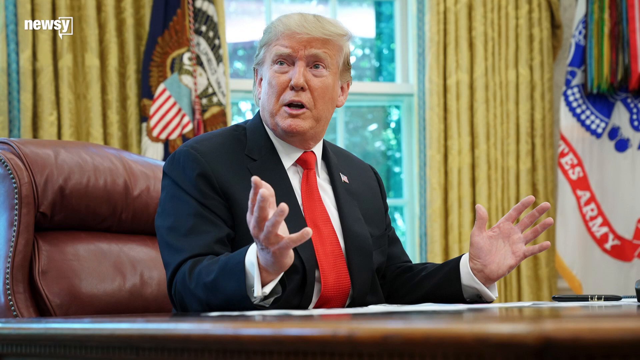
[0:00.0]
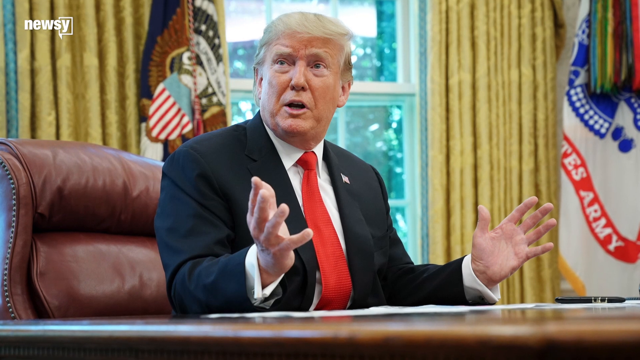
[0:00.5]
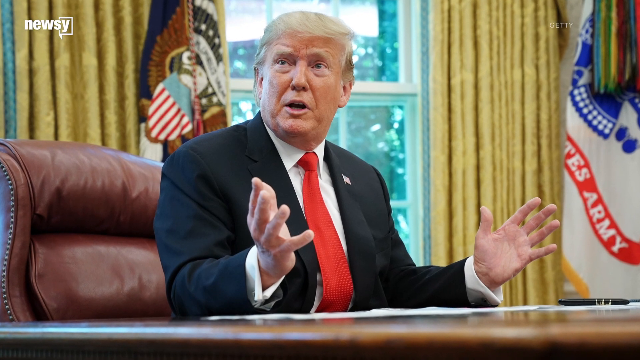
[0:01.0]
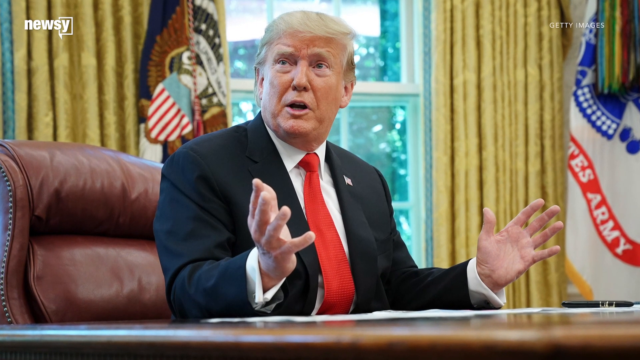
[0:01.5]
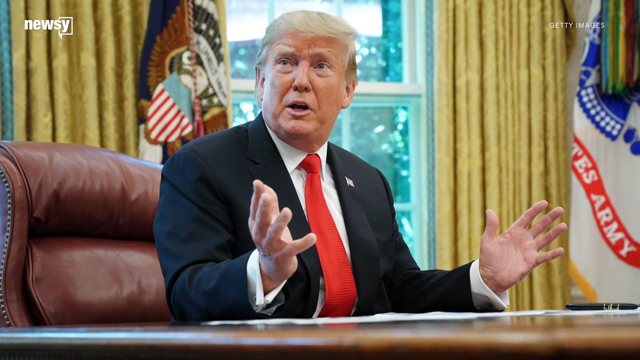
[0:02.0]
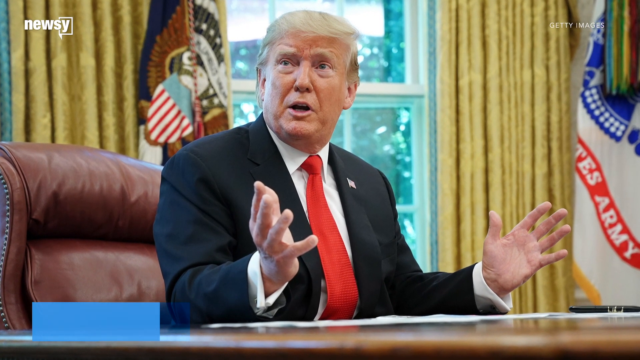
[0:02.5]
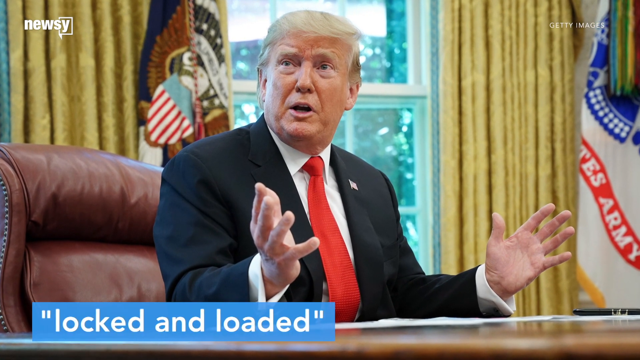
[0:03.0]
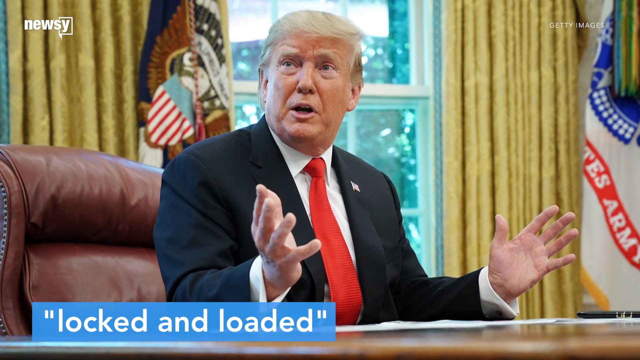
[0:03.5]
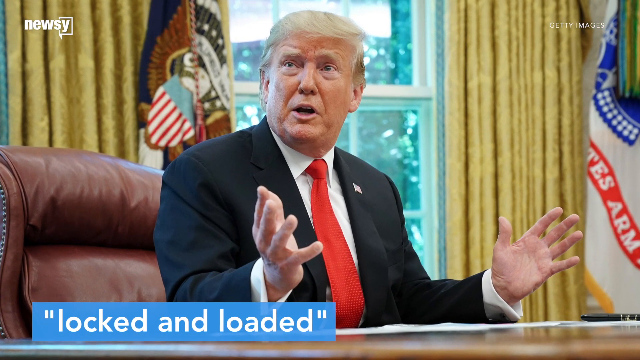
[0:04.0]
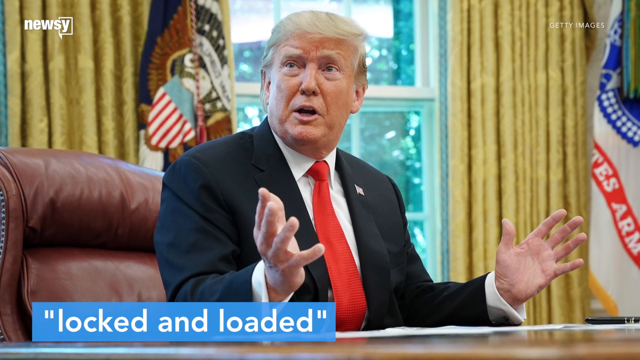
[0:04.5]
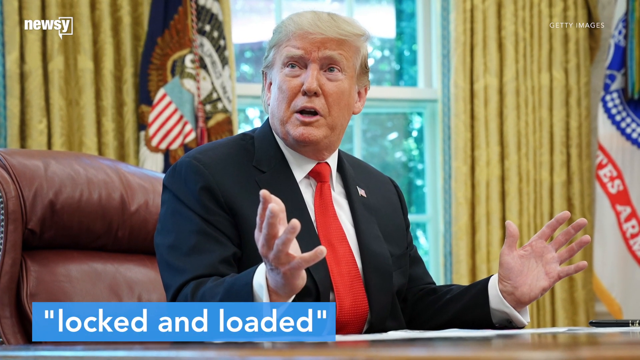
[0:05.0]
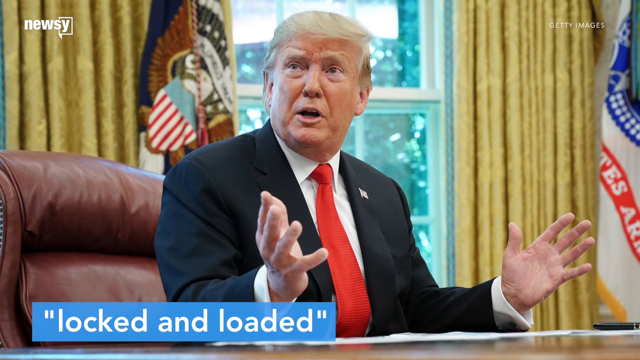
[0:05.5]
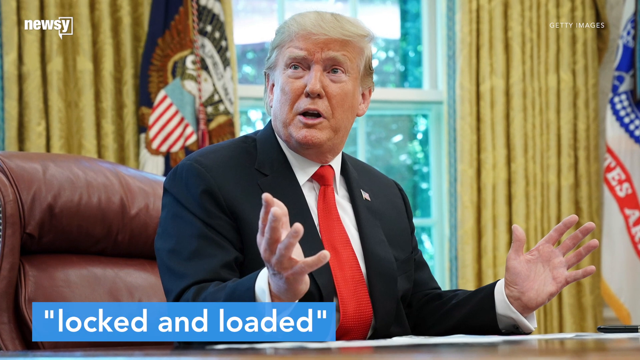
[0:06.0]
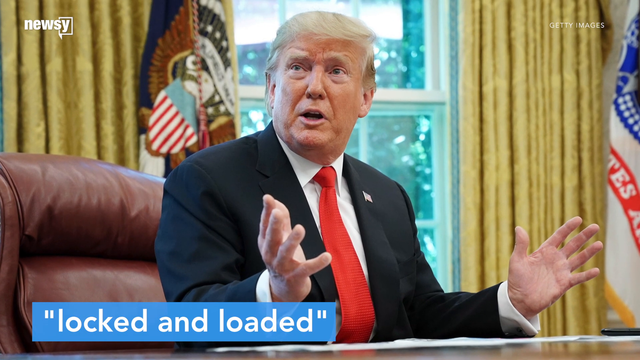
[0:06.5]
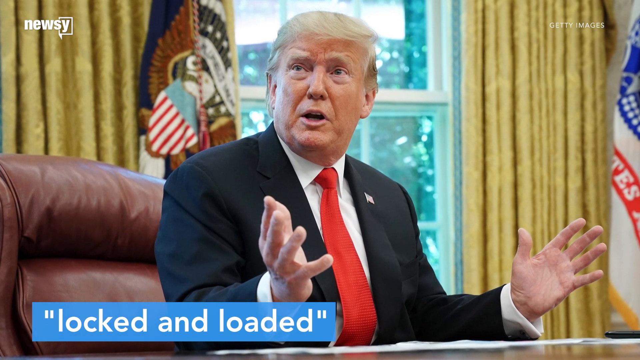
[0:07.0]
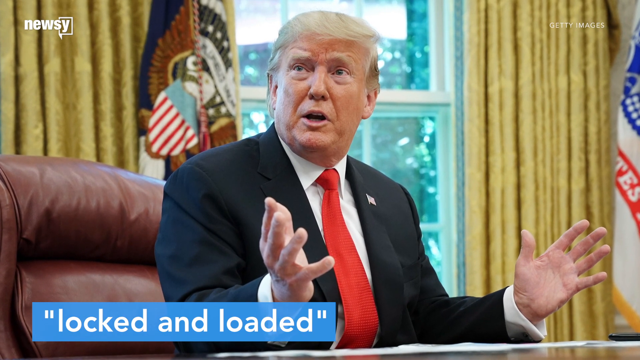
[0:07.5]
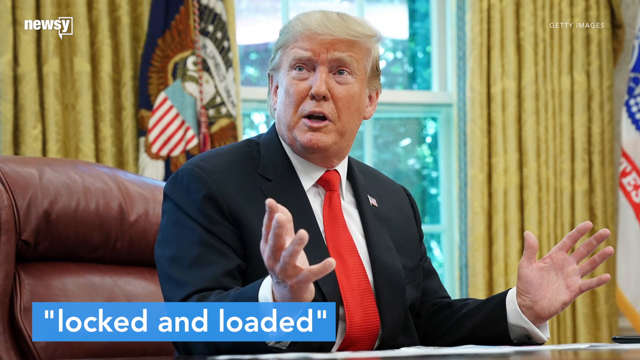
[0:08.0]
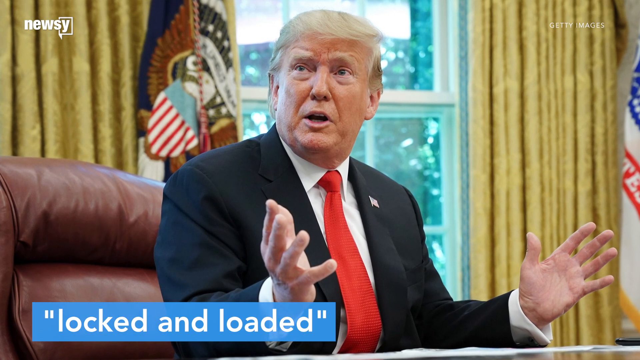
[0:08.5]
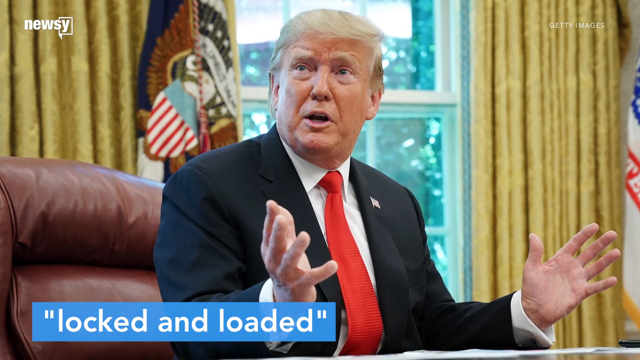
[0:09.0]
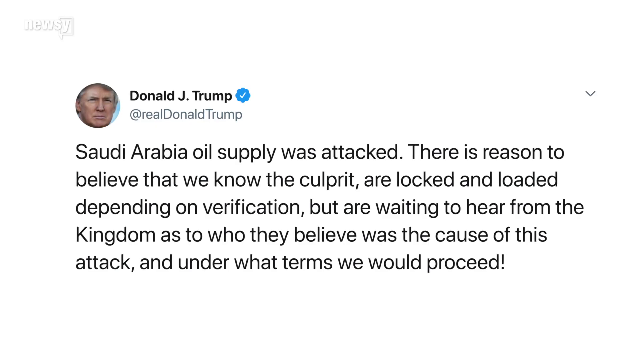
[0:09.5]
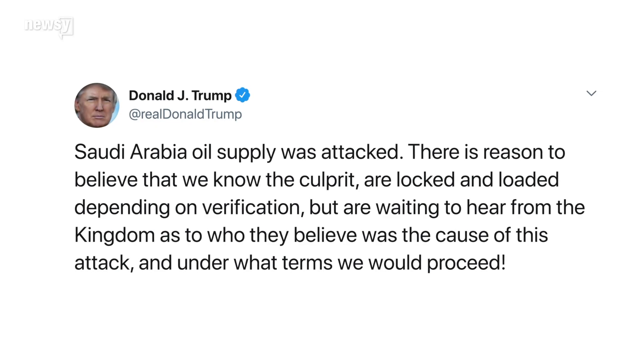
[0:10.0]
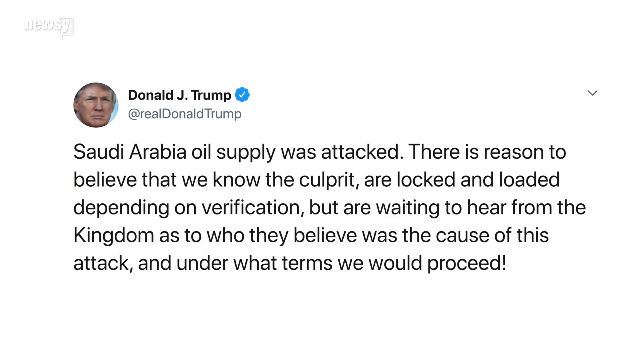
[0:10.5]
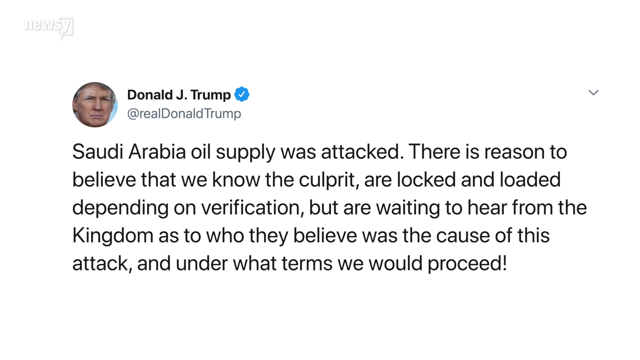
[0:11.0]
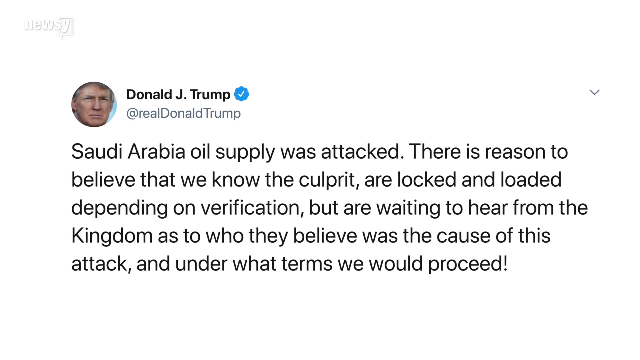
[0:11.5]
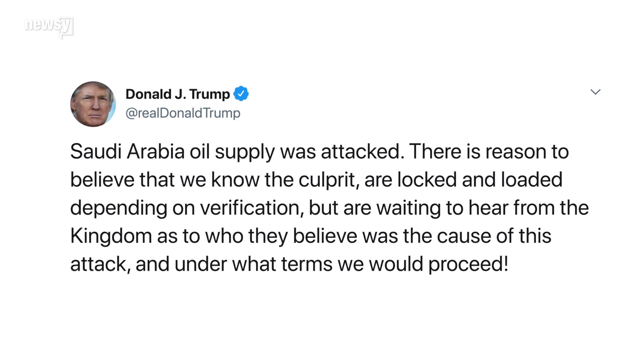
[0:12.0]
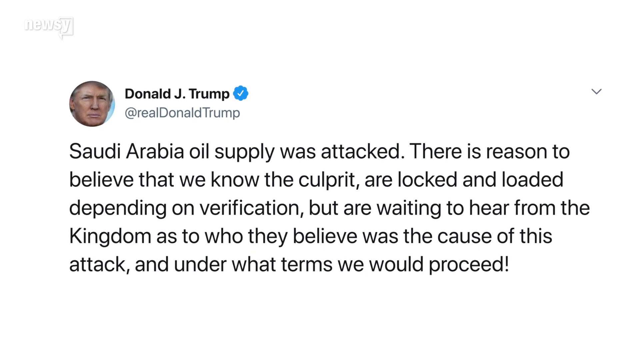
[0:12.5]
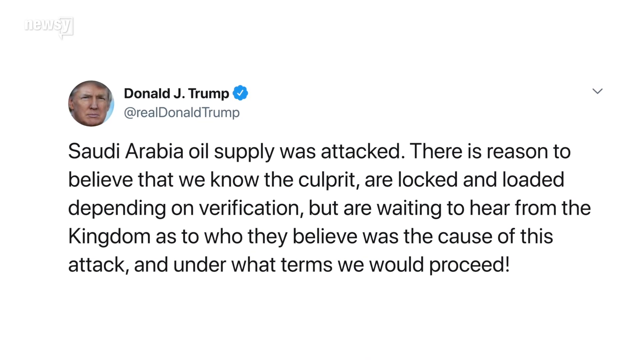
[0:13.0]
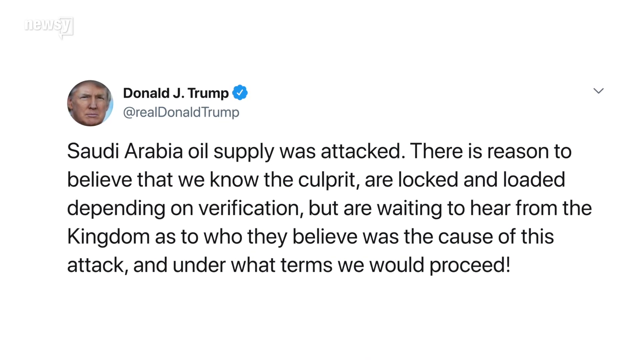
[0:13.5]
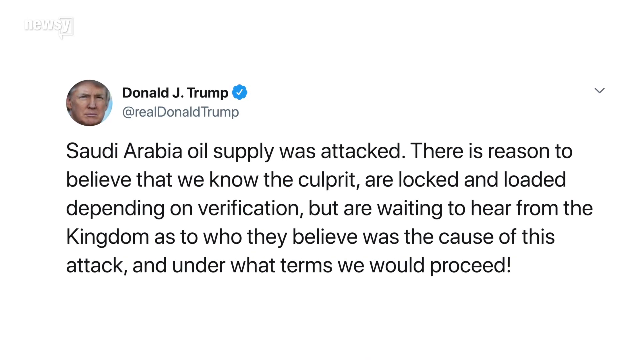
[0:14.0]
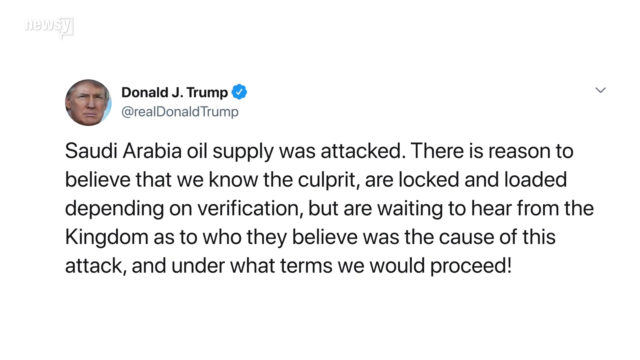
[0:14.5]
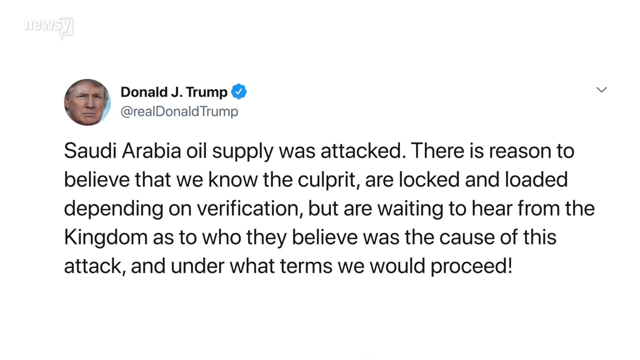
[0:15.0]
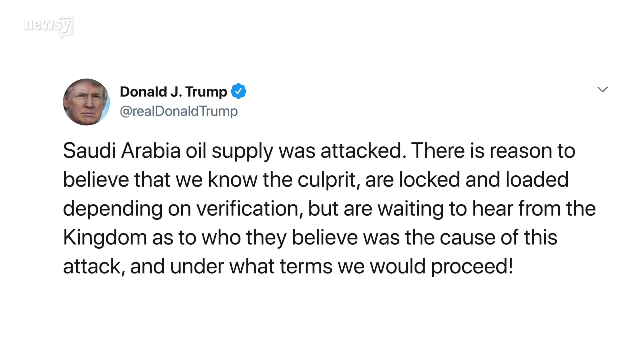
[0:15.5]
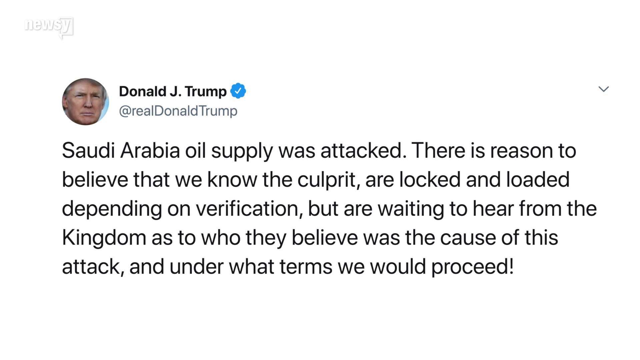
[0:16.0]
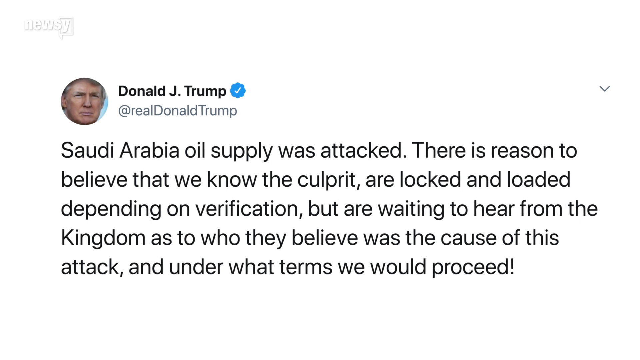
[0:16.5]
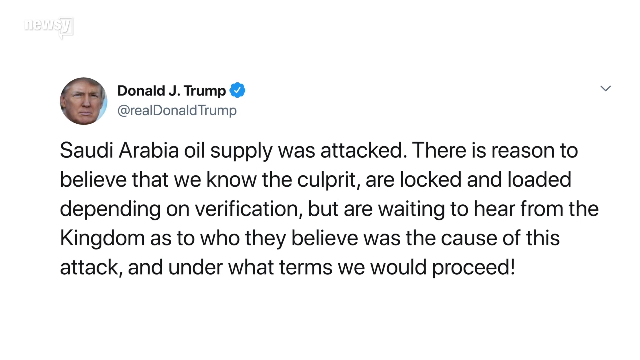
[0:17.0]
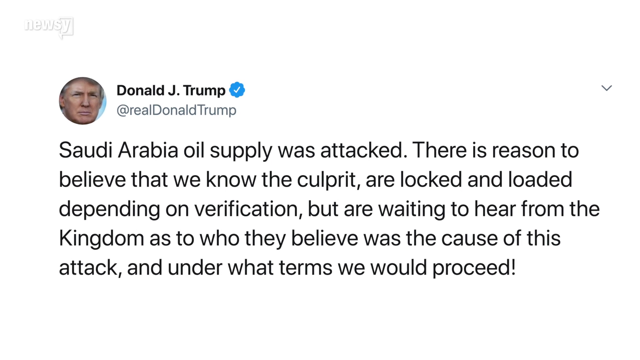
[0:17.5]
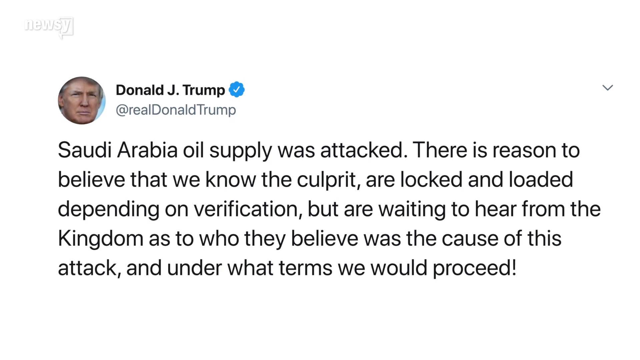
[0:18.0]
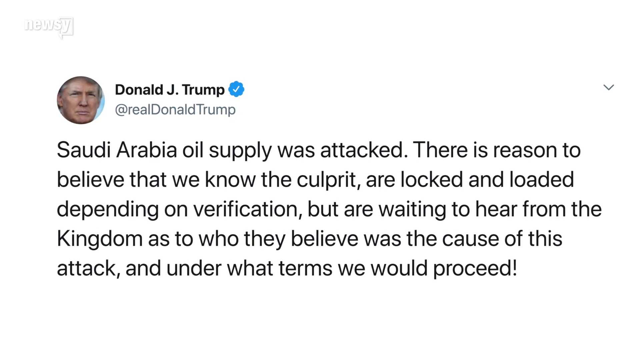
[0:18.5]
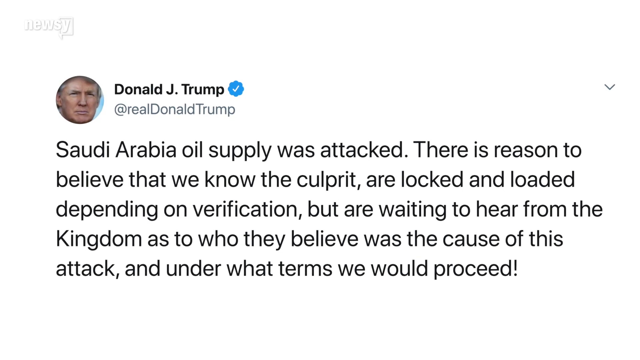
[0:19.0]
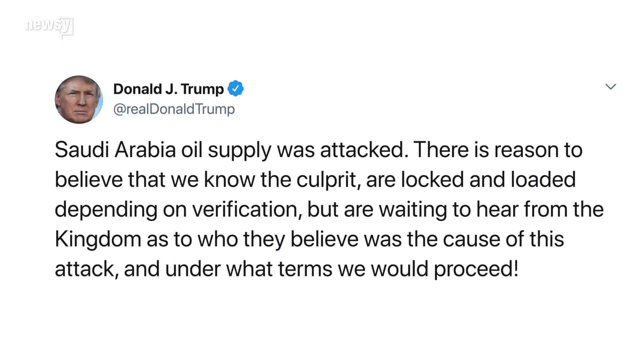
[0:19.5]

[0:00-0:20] A logo reading "Newsy" is in the upper left corner. President Donald Trump sits at his desk in the Oval Office with his hands kind of up in a gesture, wearing a navy blue suit jacket, a white shirt, and a red tie. The camera zooms in on him, and white text in a blue box appears at the bottom of the screen reading "locked and loaded" in quotation marks. A post from Trump then appears, possibly from Truth Social or from X, formerly Twitter. It reads: "Saudi Arabia oil supply was attacked. There's no reason to believe that we know the culprit. We're locked and loaded depending on verification, but are waiting to hear from the kingdom as to who they believe was the cause of this attack, and under what terms we would proceed."